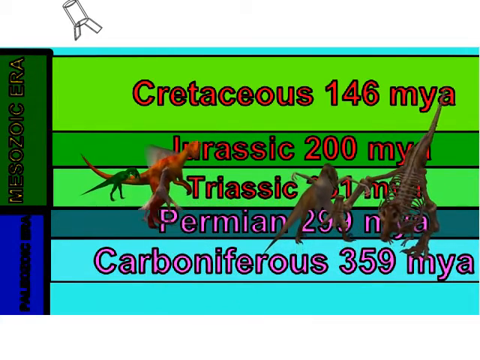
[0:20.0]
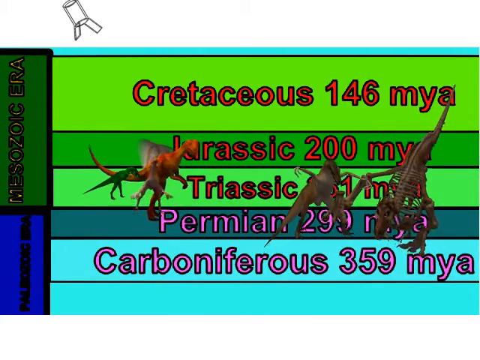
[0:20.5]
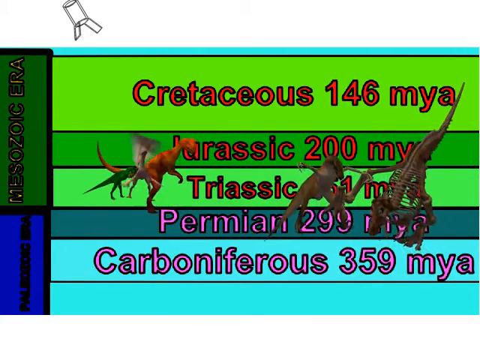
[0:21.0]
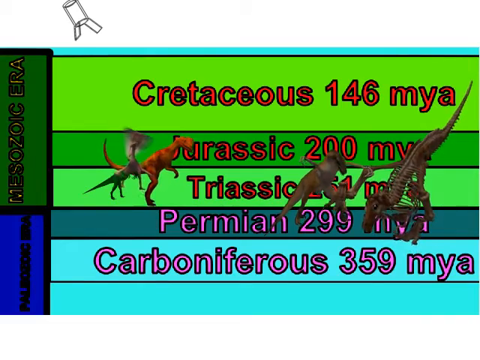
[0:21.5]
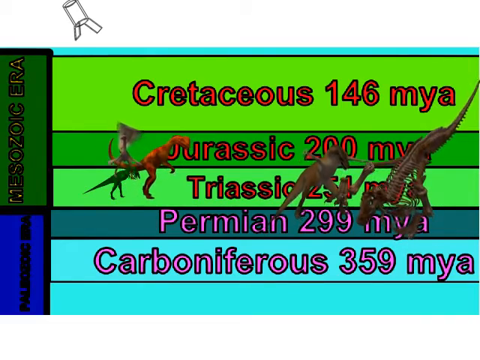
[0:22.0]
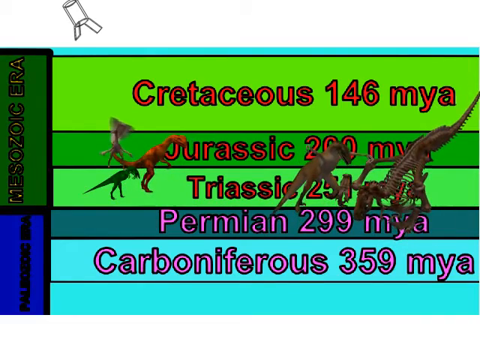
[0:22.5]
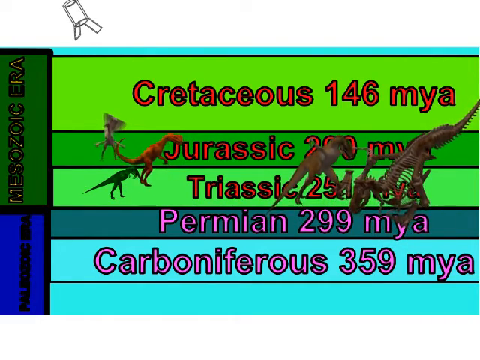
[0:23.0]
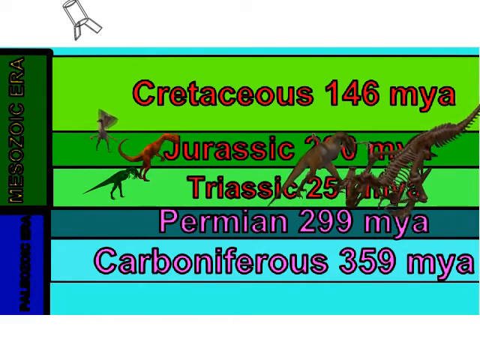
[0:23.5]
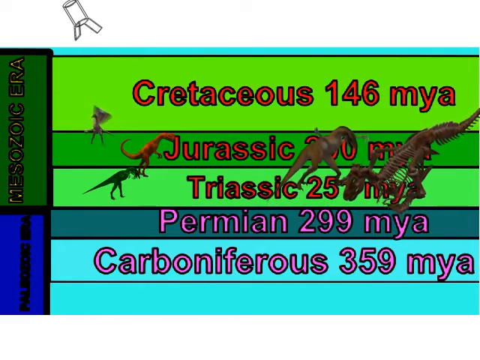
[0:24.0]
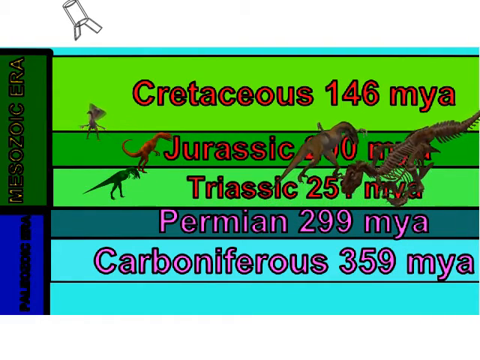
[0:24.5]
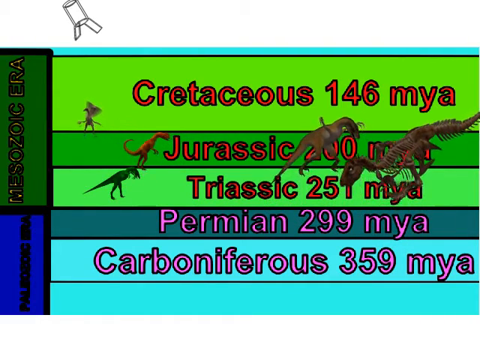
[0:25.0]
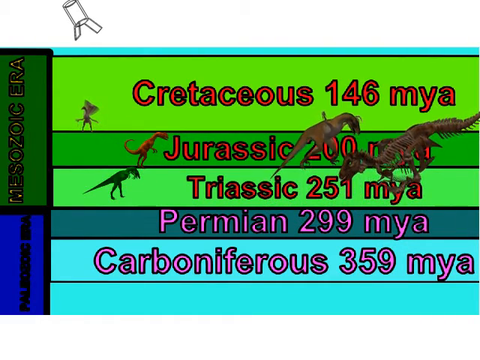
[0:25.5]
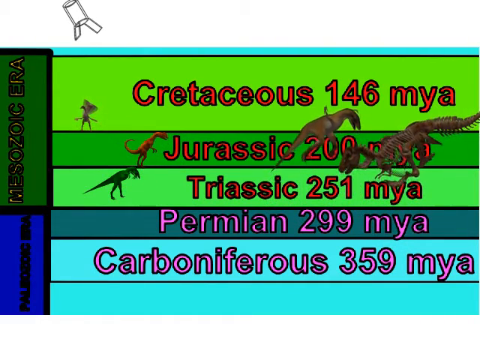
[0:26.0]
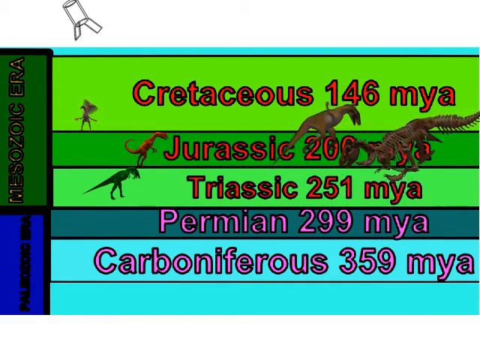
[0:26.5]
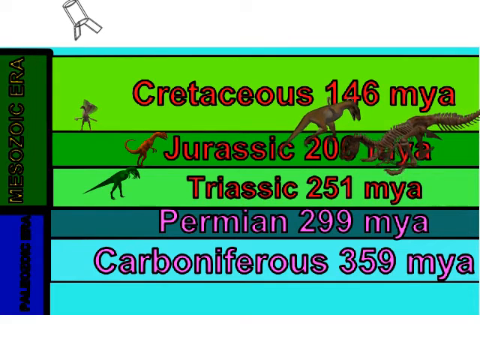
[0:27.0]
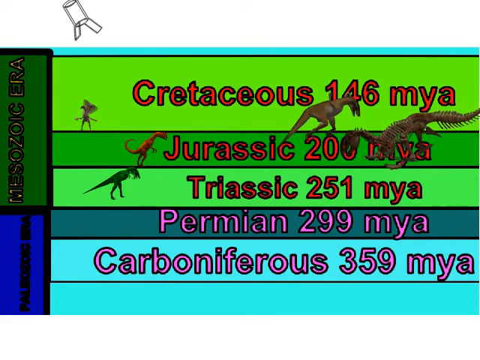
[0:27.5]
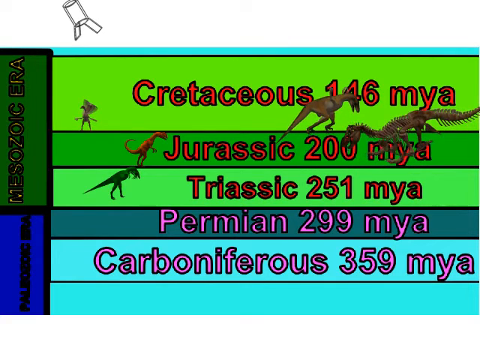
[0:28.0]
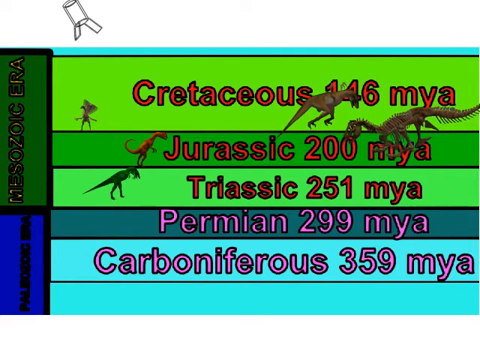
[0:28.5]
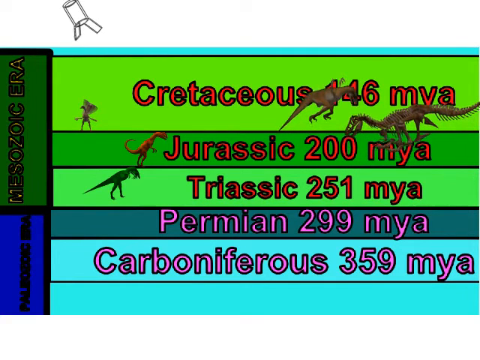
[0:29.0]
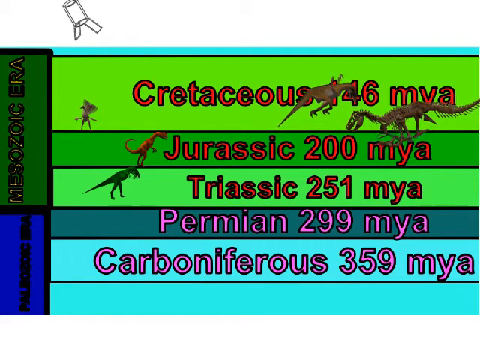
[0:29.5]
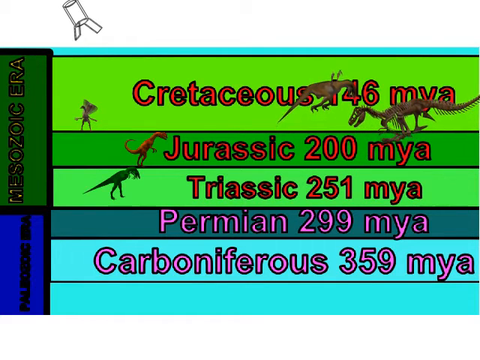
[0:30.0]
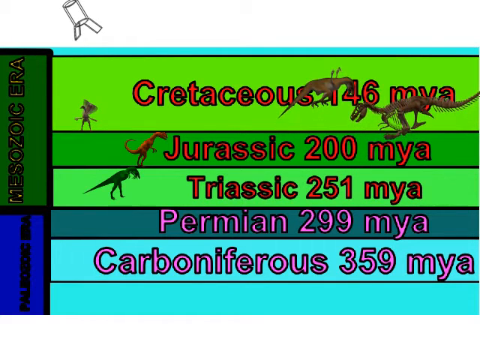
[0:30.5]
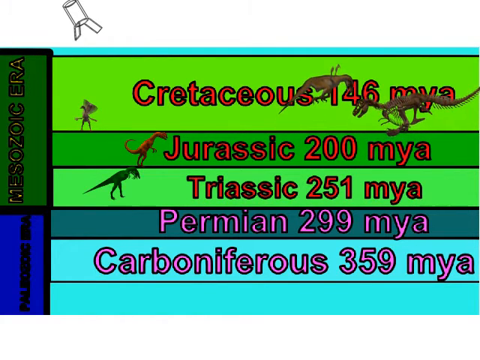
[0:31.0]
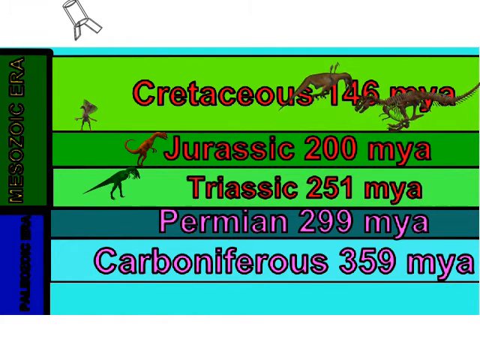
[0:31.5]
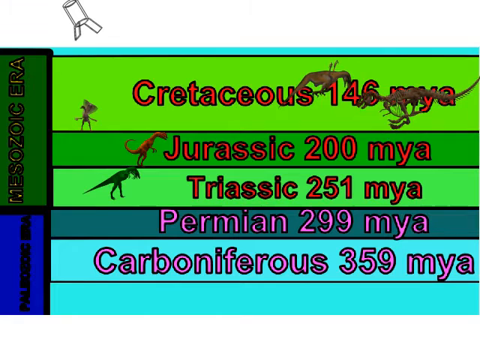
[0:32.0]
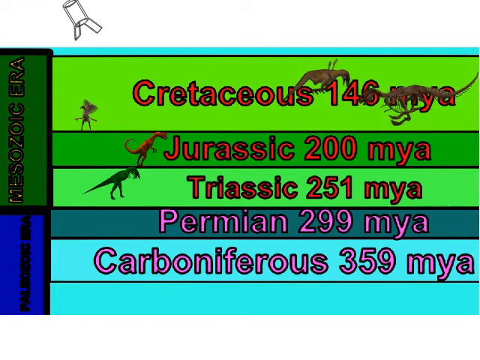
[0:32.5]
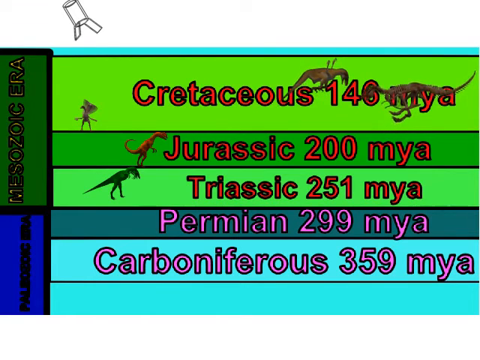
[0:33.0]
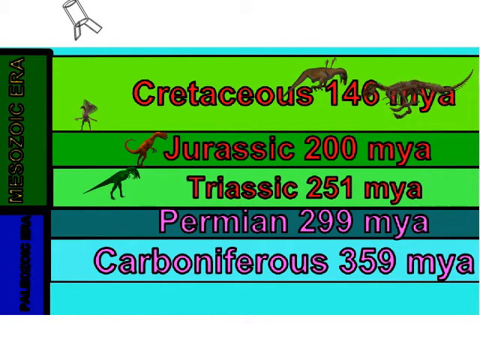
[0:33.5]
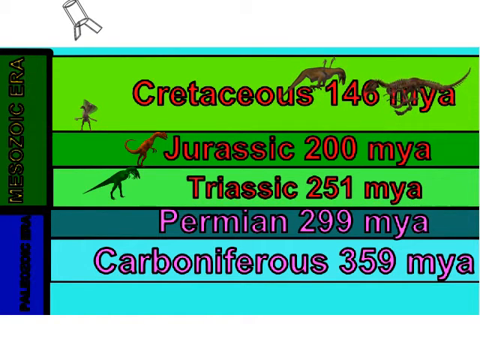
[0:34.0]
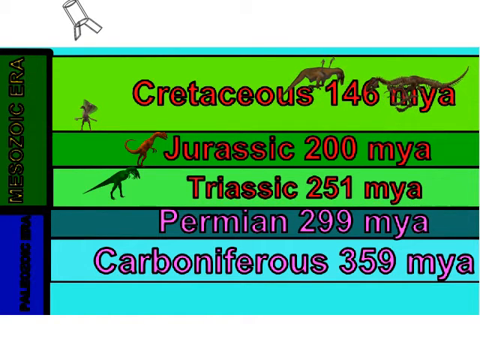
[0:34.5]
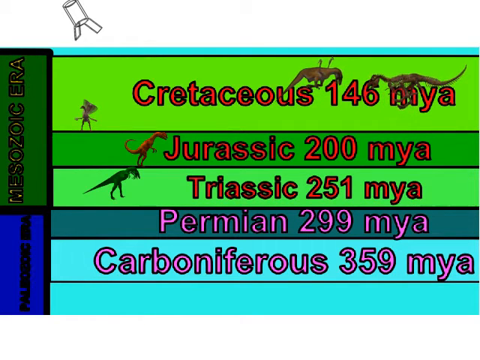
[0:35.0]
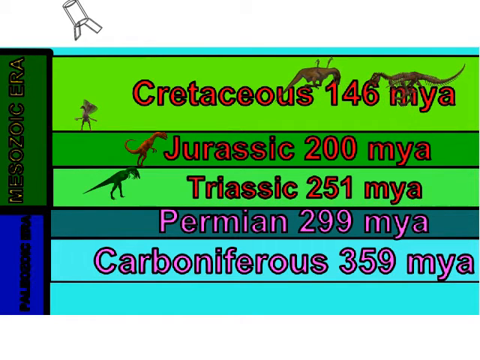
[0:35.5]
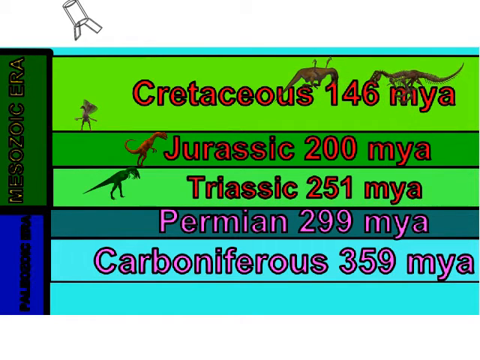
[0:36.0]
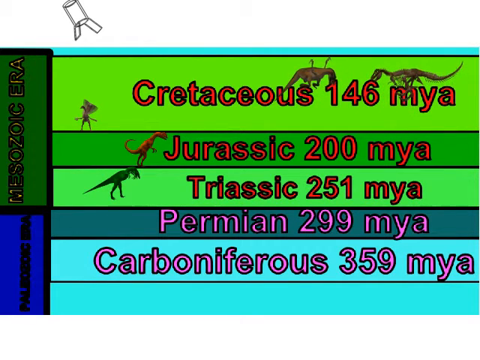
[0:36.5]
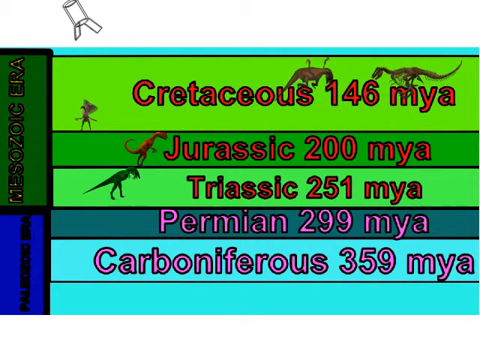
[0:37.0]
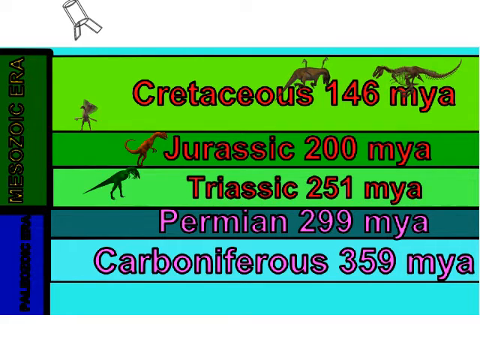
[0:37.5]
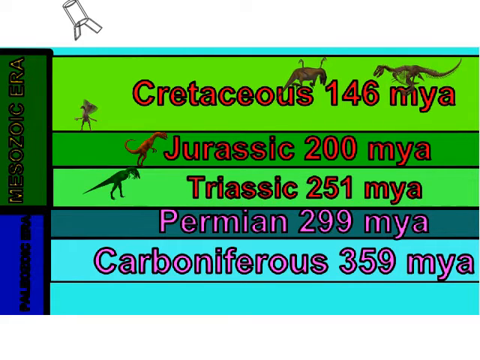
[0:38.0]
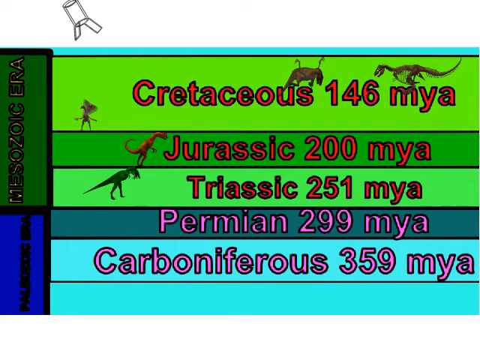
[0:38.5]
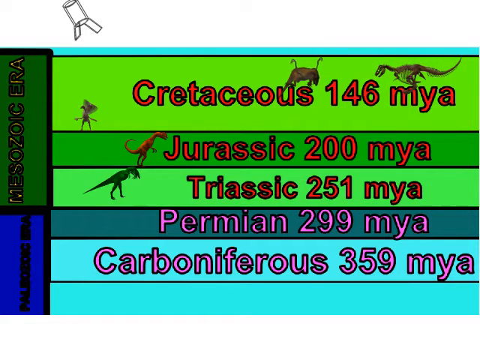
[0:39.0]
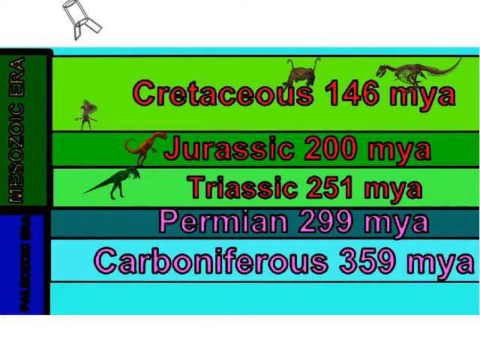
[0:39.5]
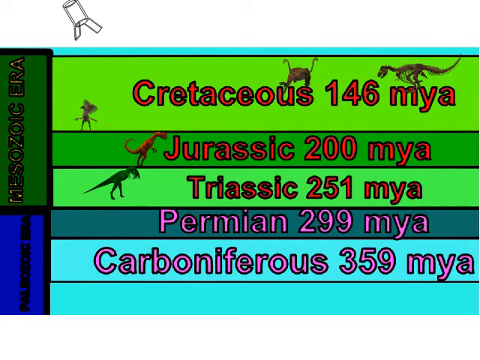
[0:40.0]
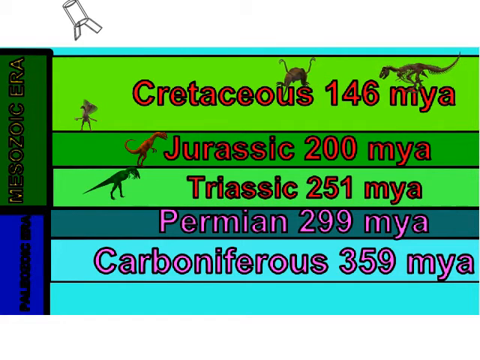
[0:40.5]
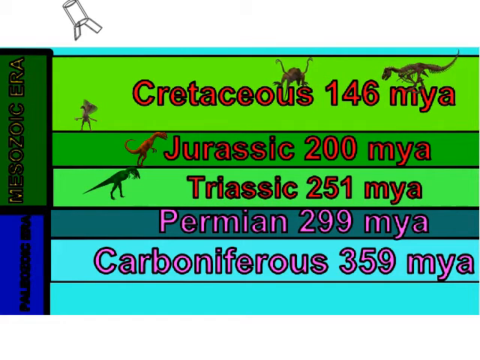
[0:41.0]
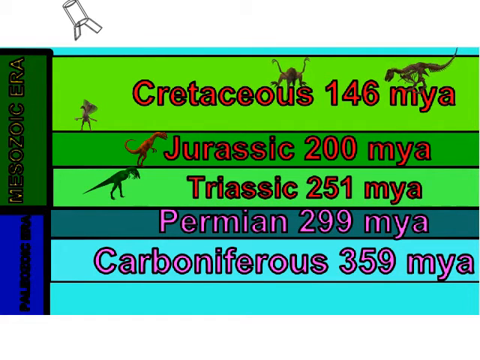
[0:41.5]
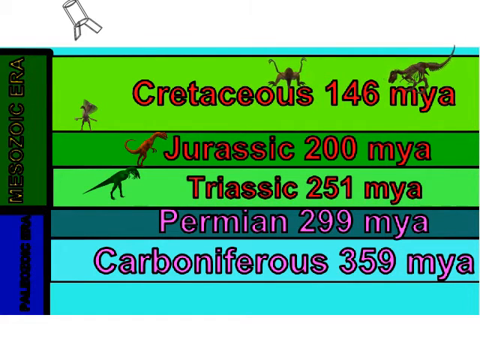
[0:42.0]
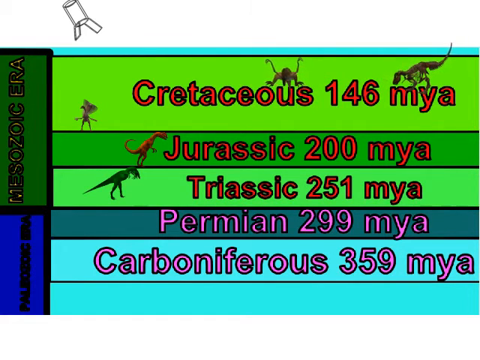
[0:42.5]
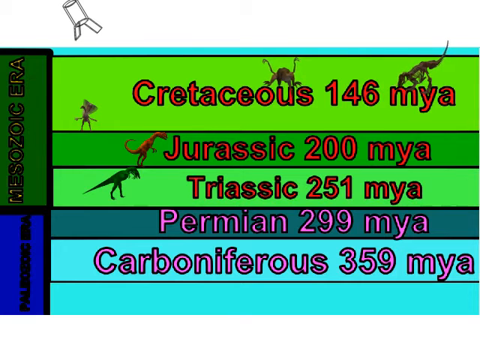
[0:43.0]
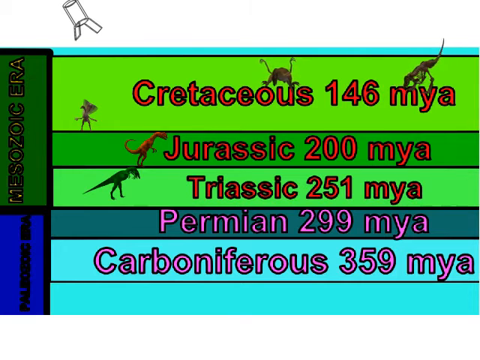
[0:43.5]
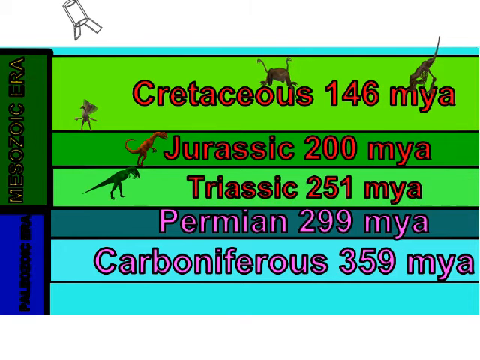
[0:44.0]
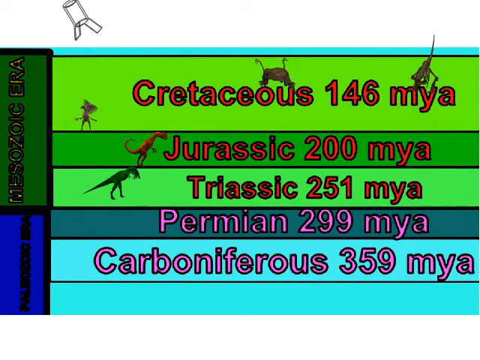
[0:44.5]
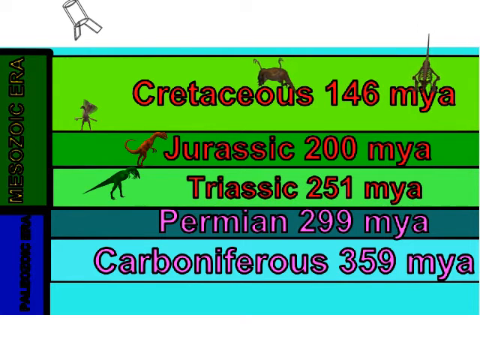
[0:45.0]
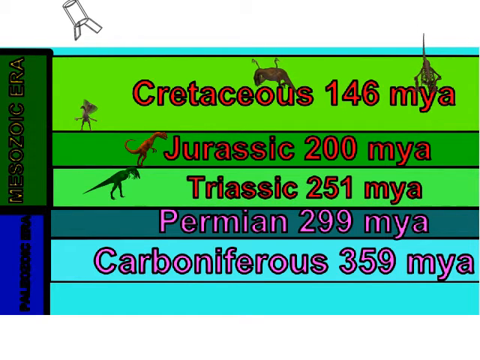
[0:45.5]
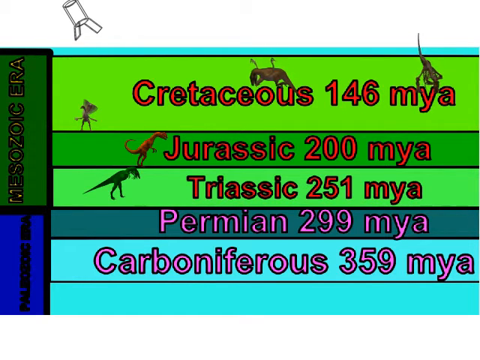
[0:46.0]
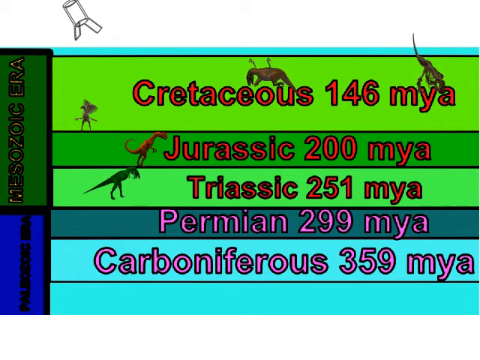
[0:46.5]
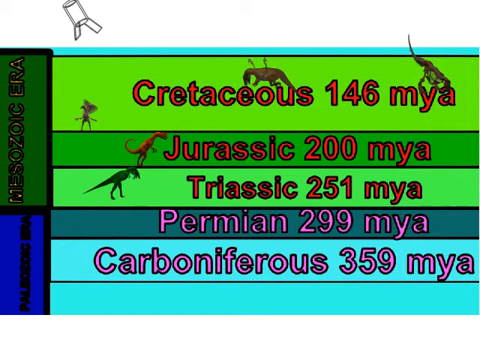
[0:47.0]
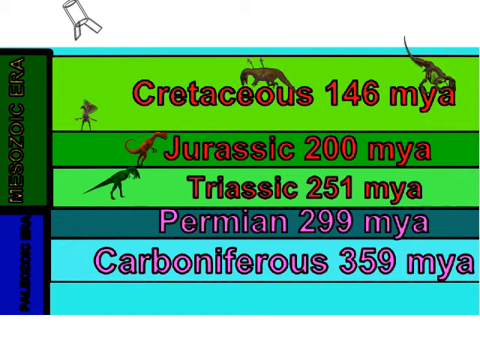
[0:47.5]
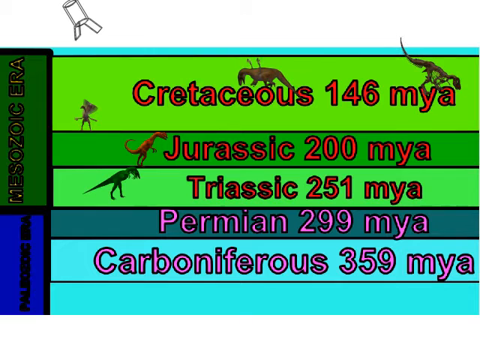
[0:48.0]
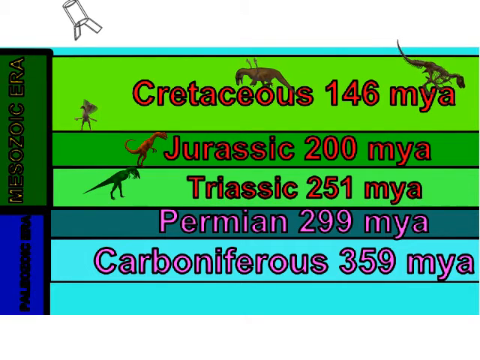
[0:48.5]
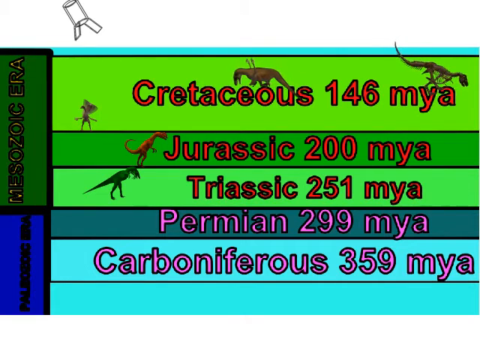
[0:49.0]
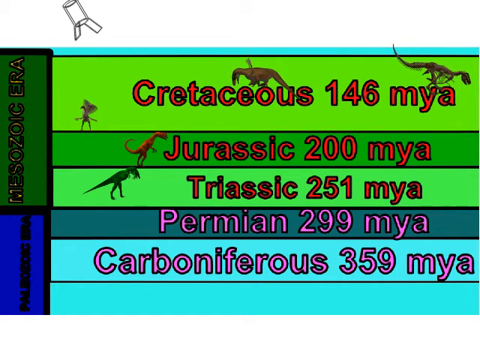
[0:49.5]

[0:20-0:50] Different dinosaurs, each different in nature, are shown. Two of them are quite huge in stature compared to the others. They look like they have wings and fly behind the words on the screen. The dinosaurs move in slow motion, each in its own direction rather than all the same way. The words in the background include "Carboniferous-359MYA" and another label ending in "299MYA", which seem to belong to the dinosaurs.